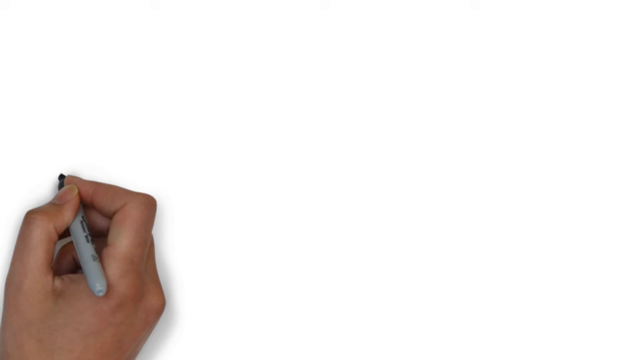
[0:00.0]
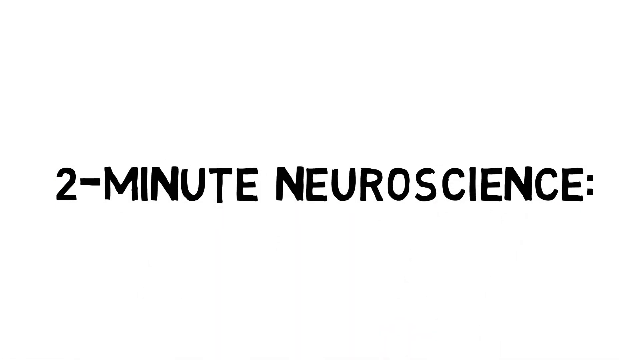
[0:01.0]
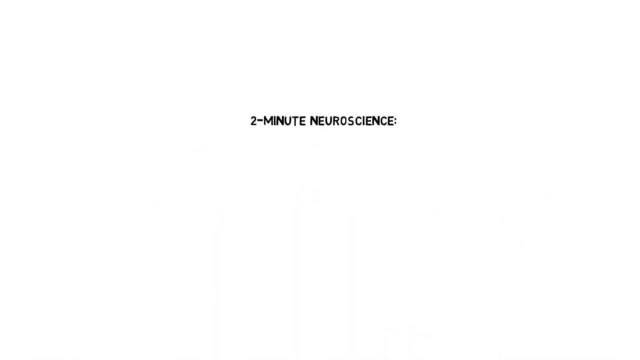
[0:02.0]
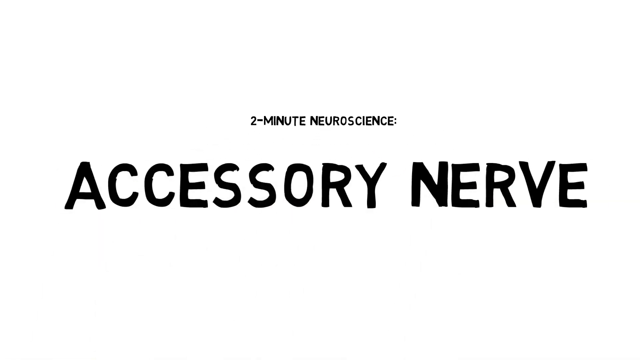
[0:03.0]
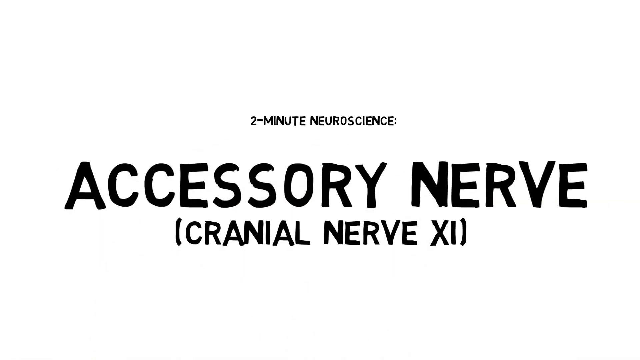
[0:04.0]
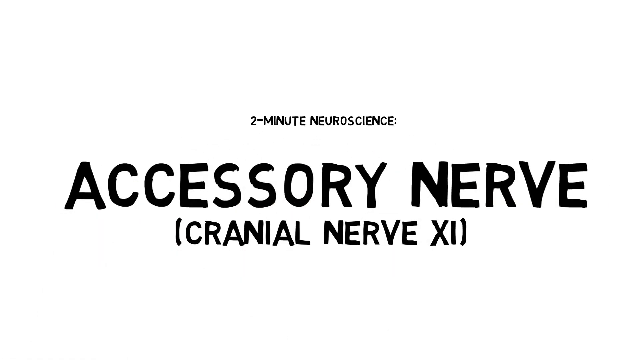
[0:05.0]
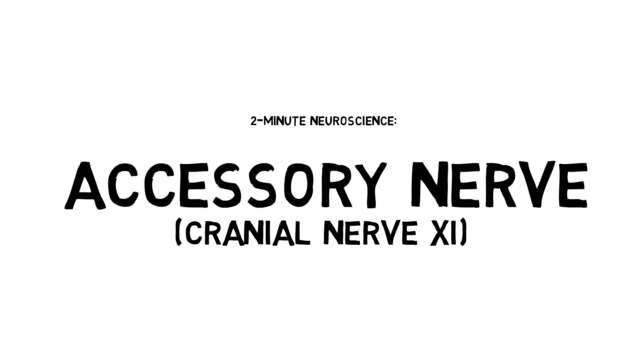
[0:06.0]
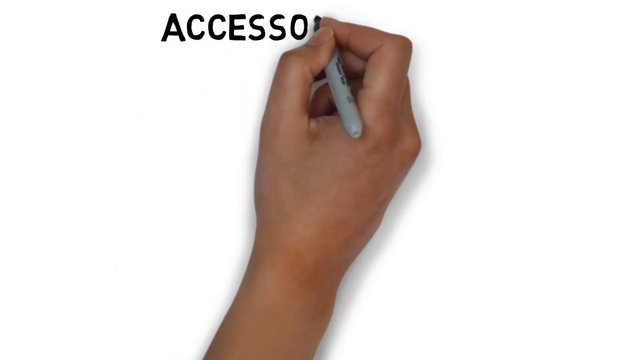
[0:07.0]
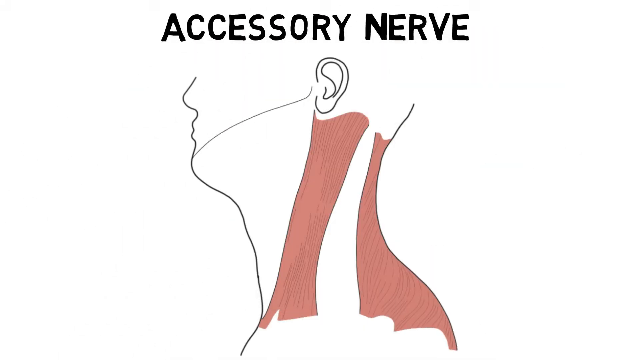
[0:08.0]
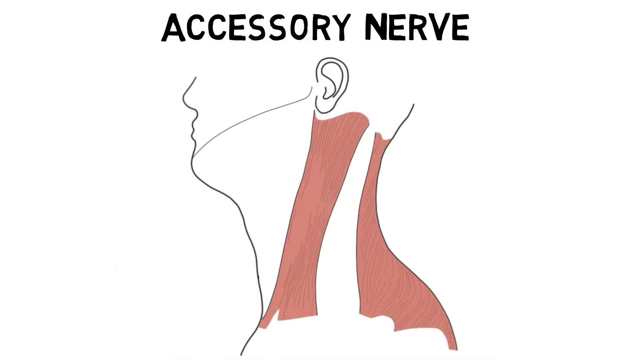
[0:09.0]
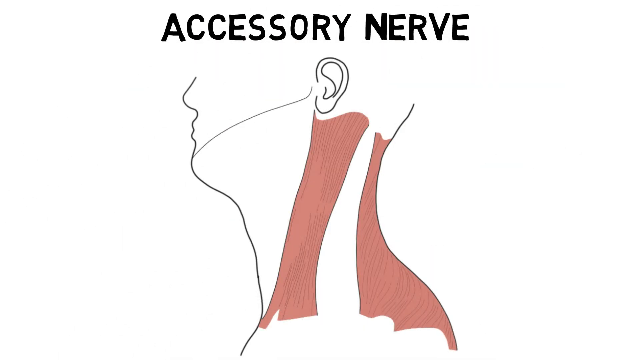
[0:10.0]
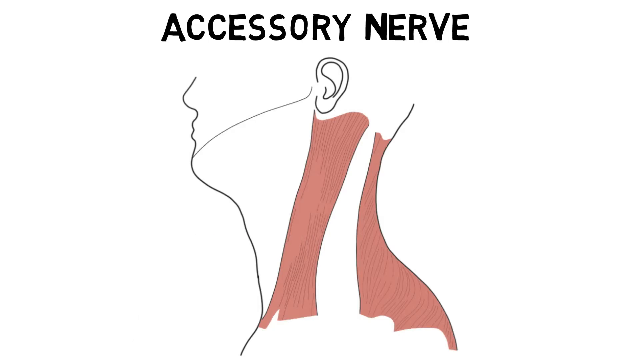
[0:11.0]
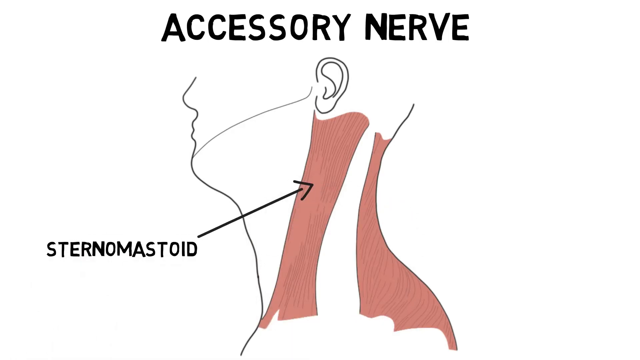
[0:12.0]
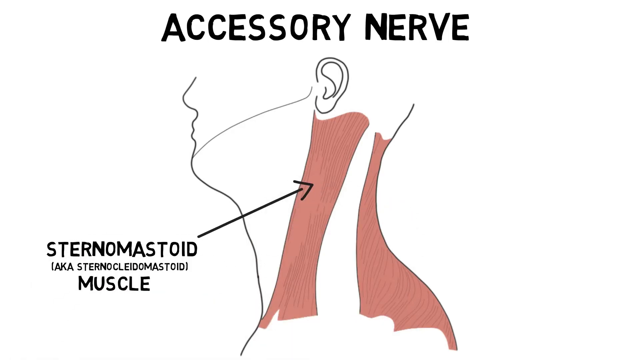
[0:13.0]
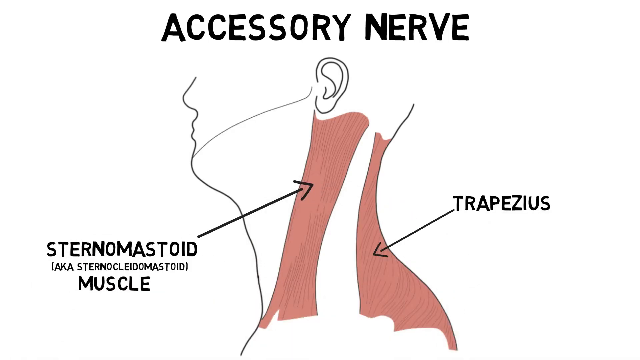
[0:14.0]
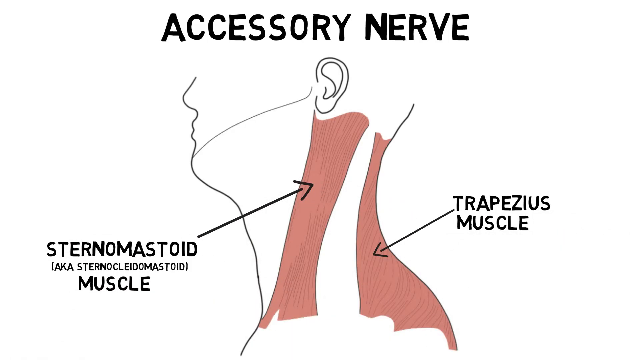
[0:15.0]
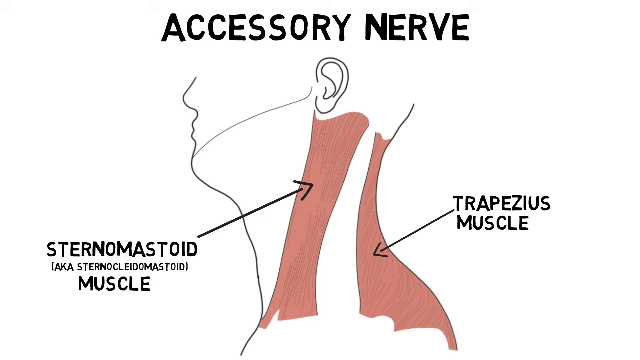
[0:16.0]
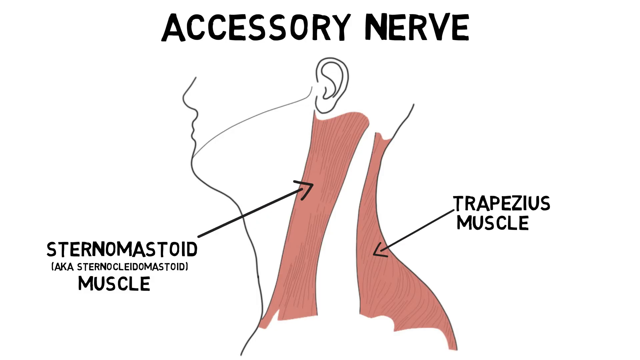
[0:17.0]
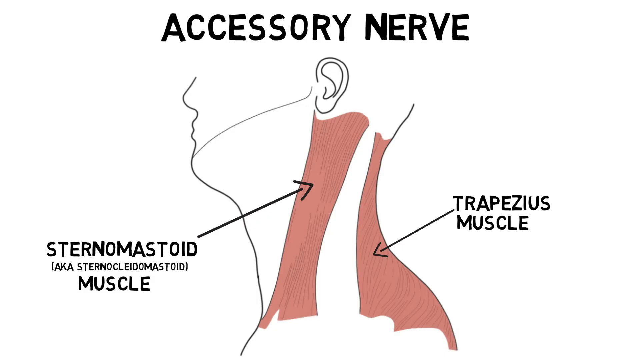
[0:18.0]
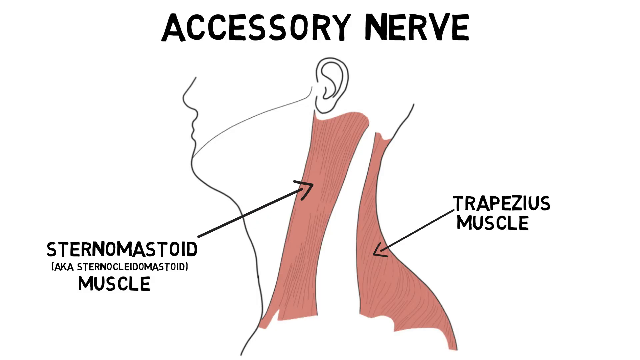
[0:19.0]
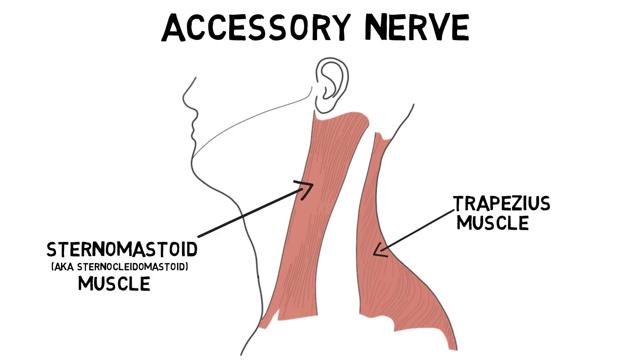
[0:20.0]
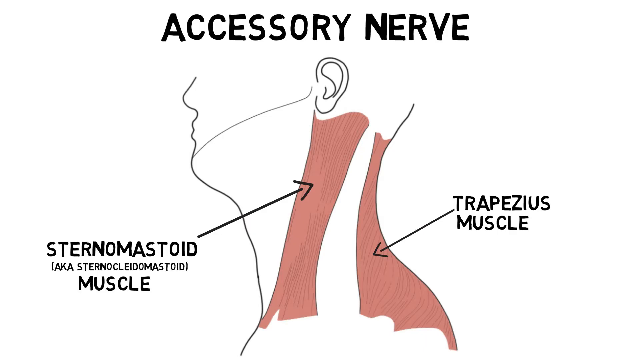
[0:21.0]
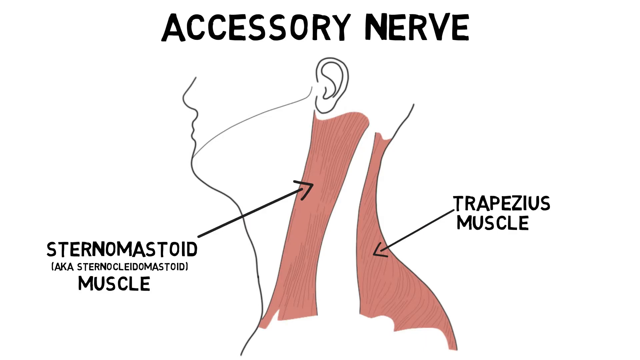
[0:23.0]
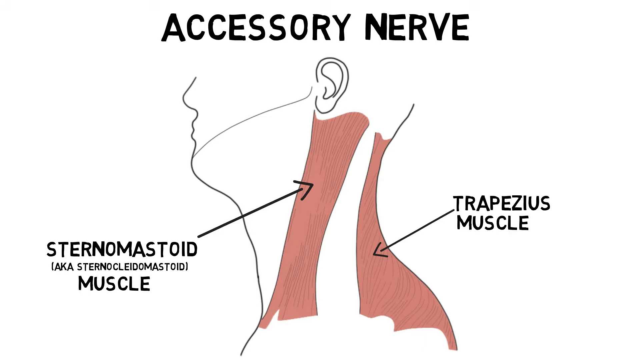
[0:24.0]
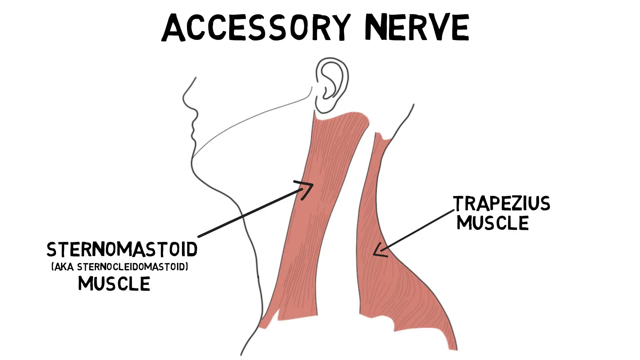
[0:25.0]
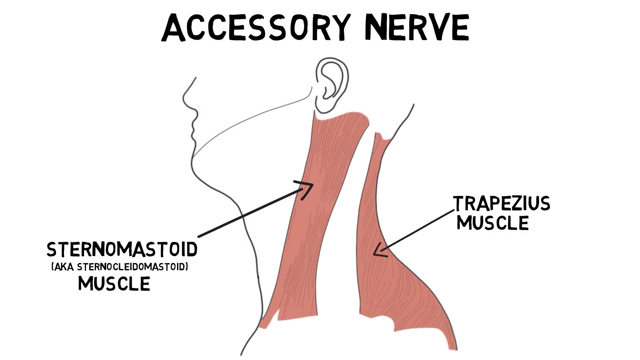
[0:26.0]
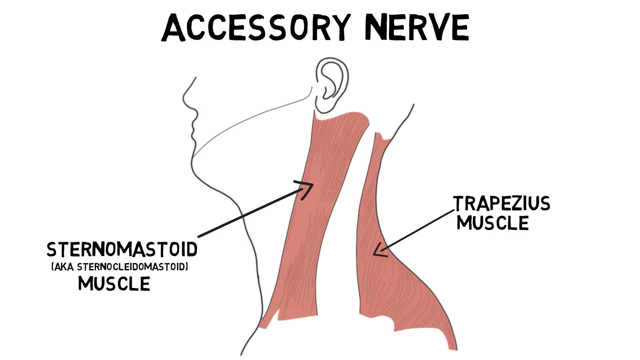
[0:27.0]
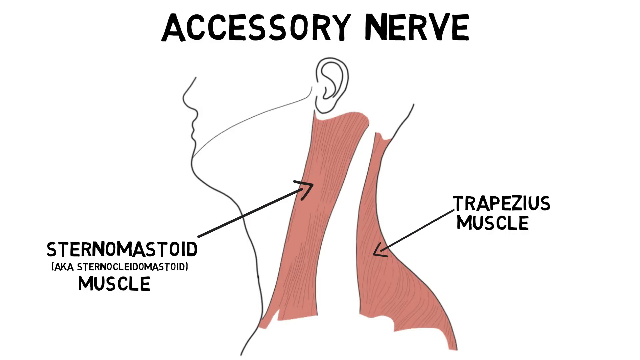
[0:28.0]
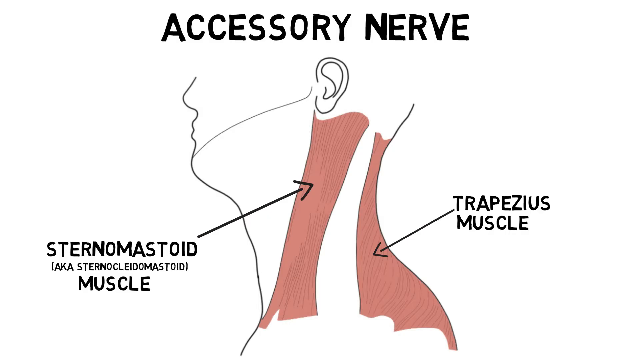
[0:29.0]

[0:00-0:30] "Two-Minute Neuroscience" is written in black marker on a white eraseboard. The video then moves to "Accessory Nerve" and "Cranial Nerve XI." Next comes a drawing of the accessory nerve in two sections: one runs down the back of the neck from the head, and one goes right under the ear and down. The head is drawn as only half a head. Everything is on a white background, all the writing is black, and the two muscles are shown in a dark pink. The section running under the ear is labeled "Sternomastoid," a.k.a. "Sternocledomastoid Muscle," and the one running down the back of the head is labeled "Trapezius Muscle."